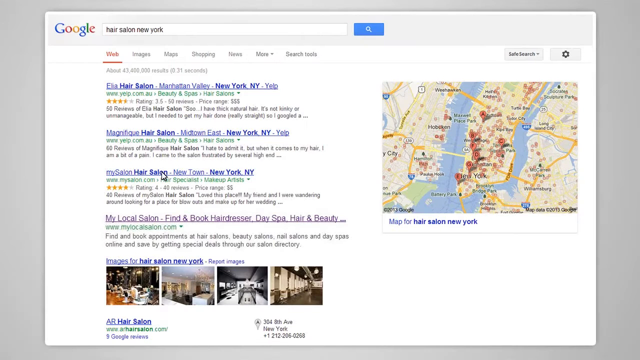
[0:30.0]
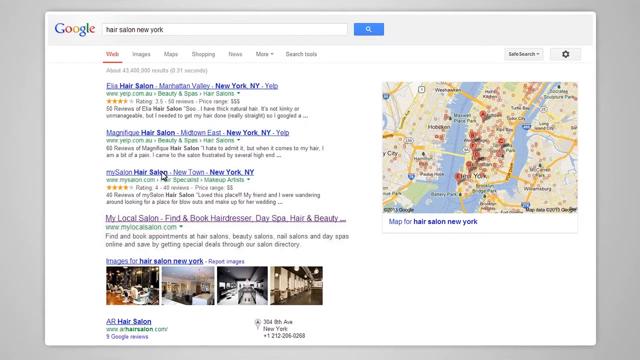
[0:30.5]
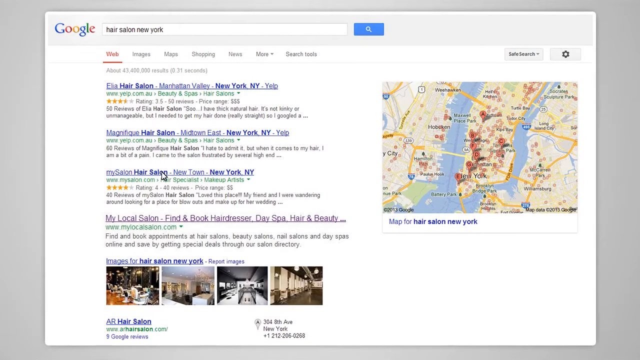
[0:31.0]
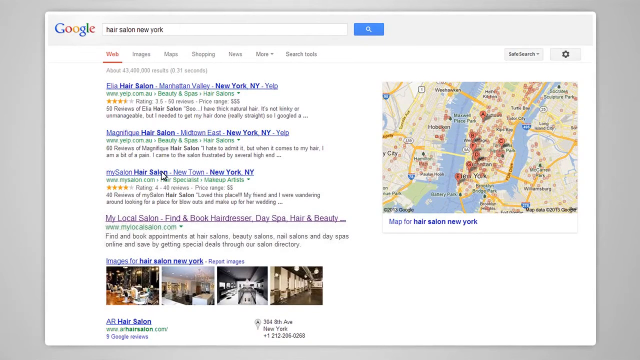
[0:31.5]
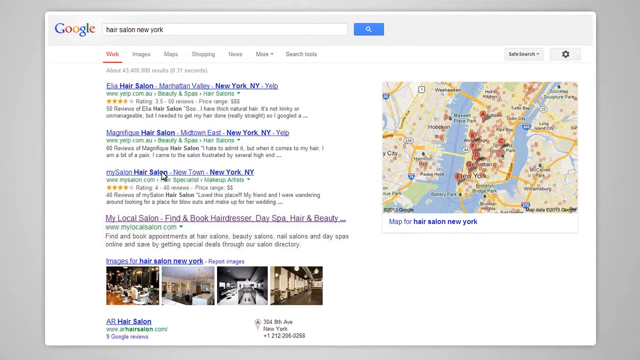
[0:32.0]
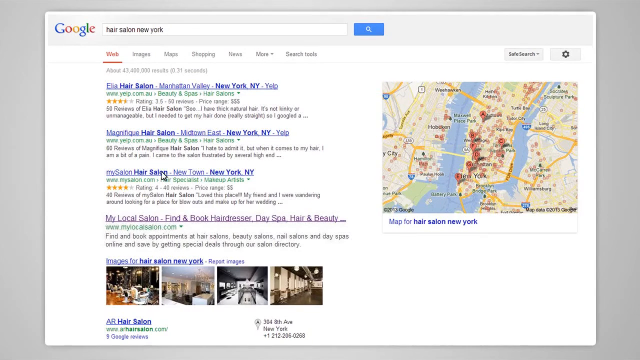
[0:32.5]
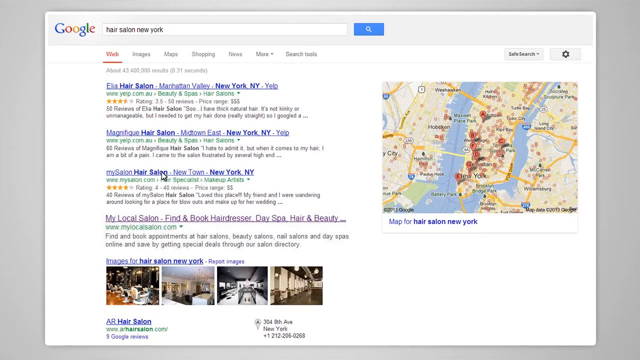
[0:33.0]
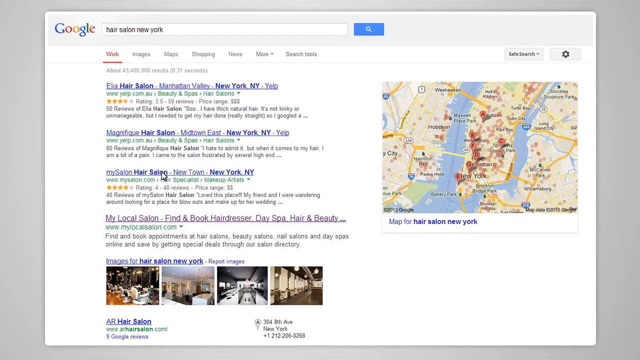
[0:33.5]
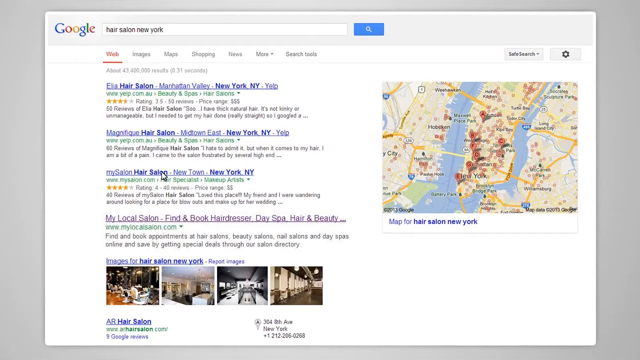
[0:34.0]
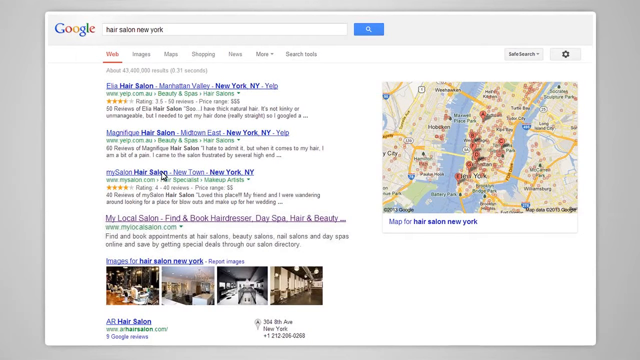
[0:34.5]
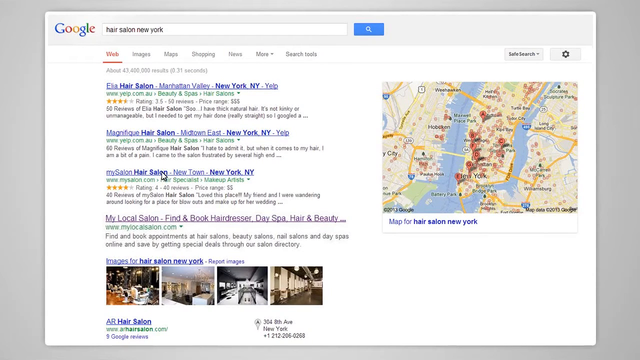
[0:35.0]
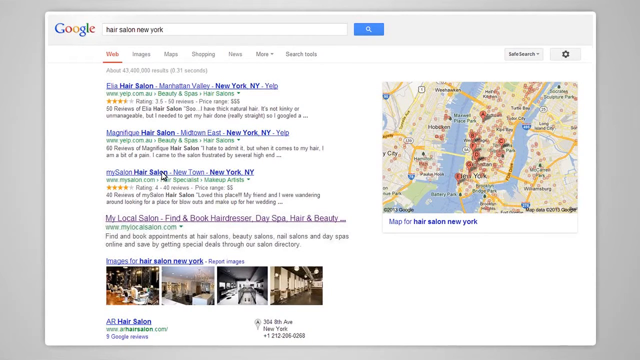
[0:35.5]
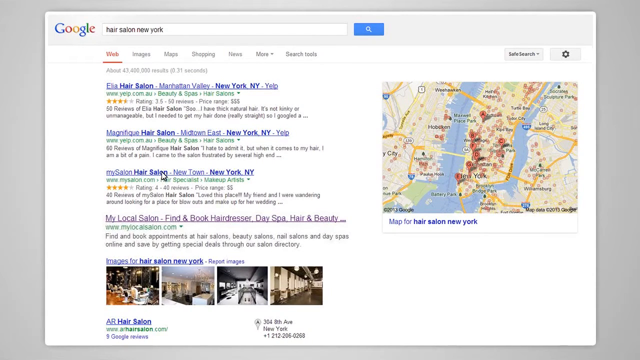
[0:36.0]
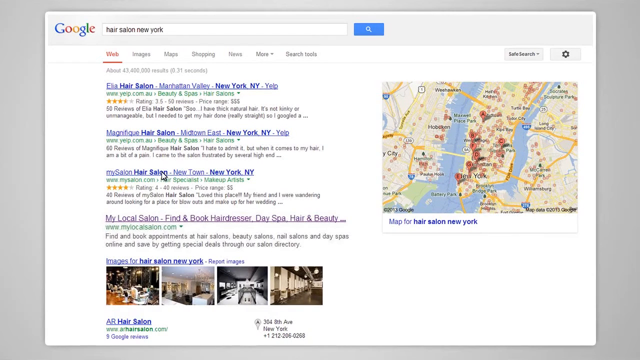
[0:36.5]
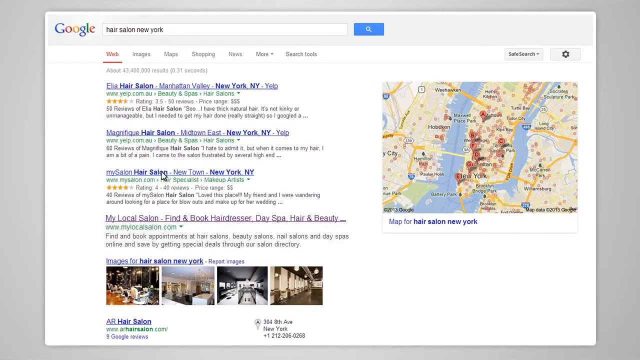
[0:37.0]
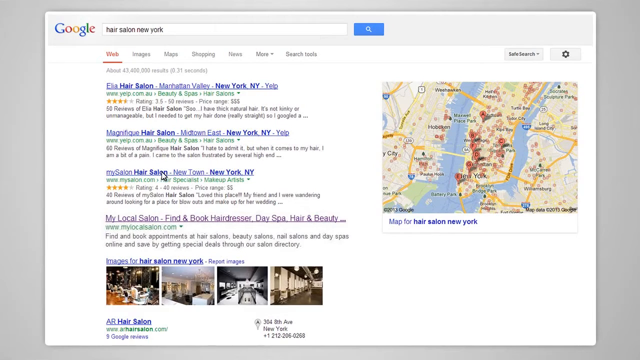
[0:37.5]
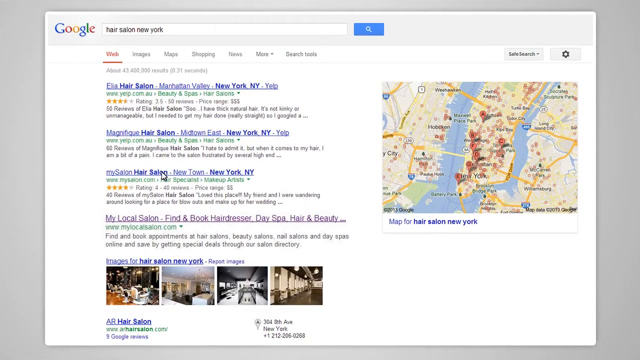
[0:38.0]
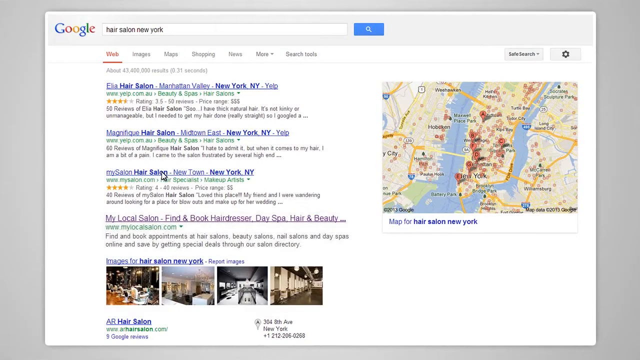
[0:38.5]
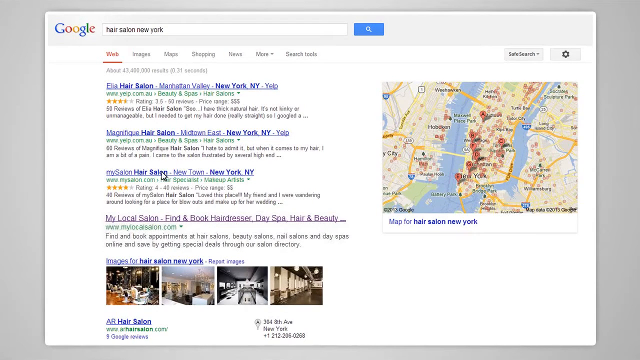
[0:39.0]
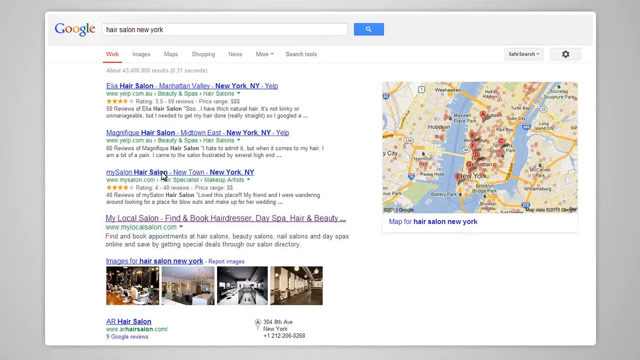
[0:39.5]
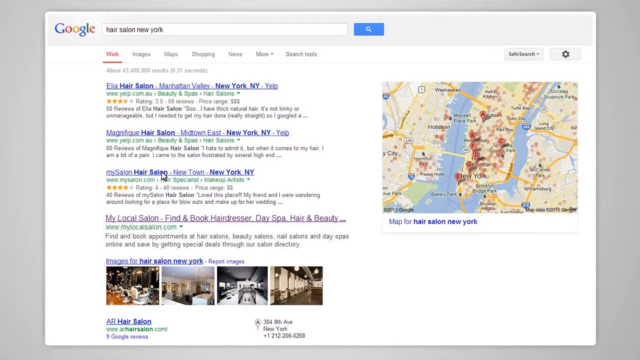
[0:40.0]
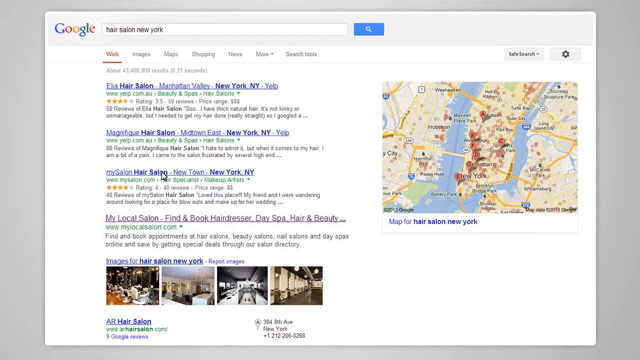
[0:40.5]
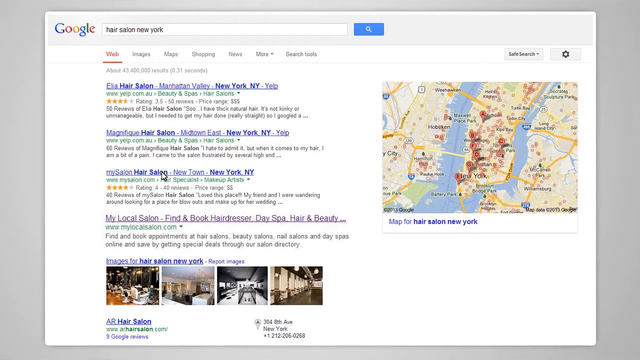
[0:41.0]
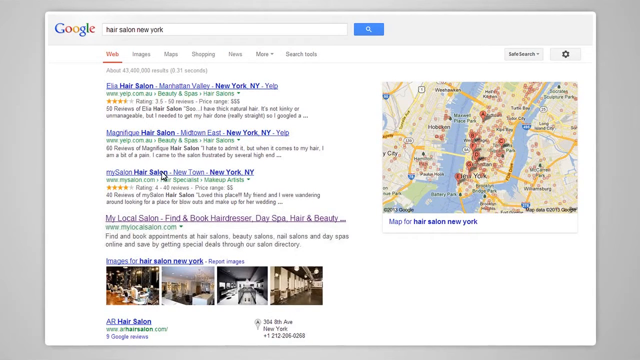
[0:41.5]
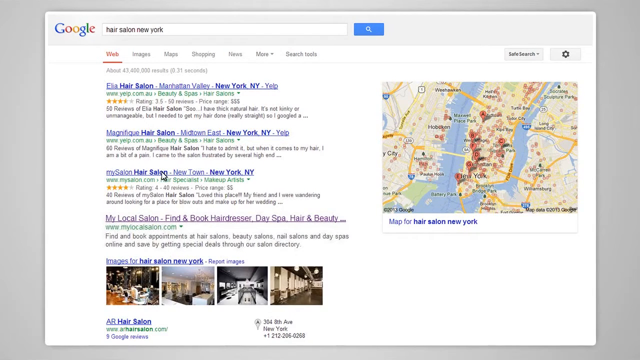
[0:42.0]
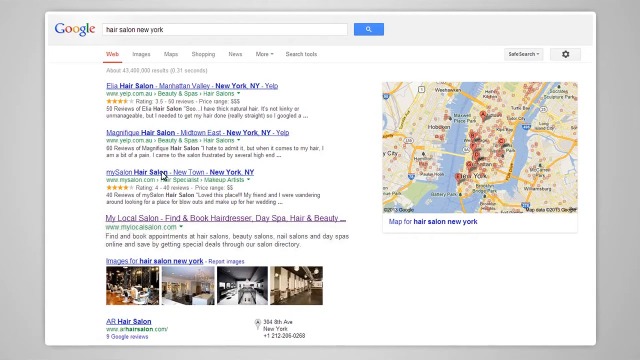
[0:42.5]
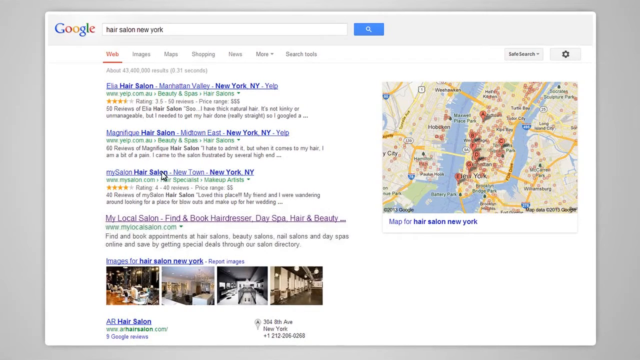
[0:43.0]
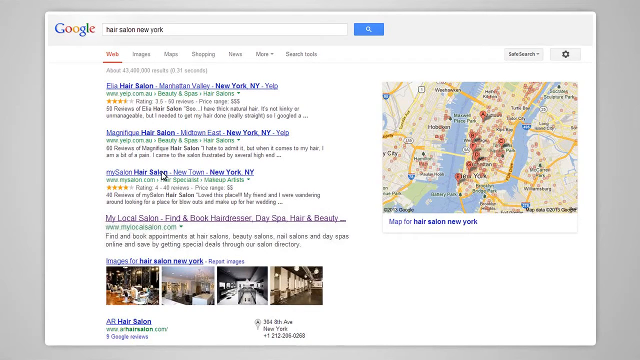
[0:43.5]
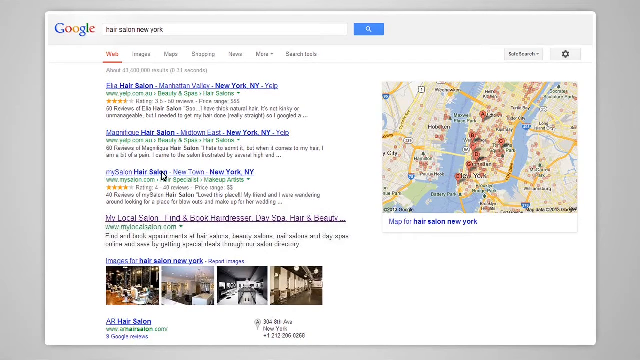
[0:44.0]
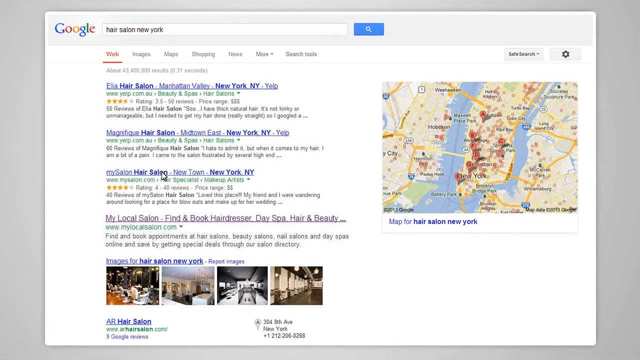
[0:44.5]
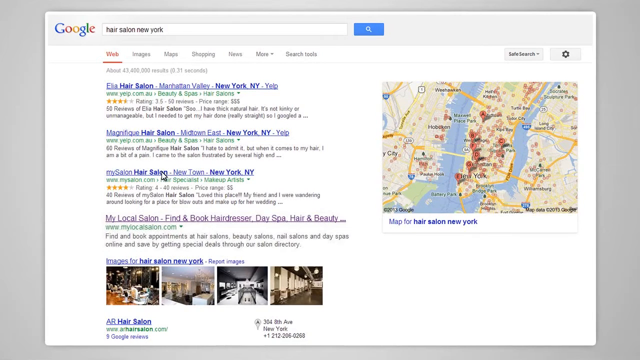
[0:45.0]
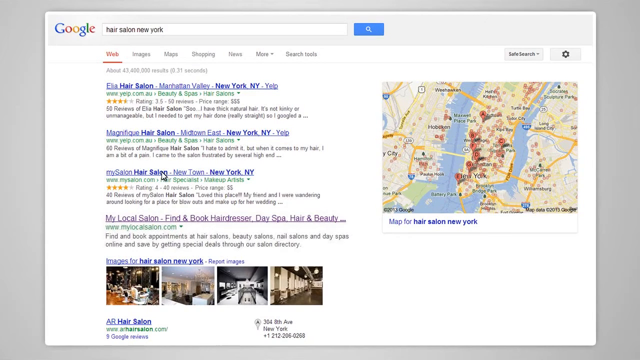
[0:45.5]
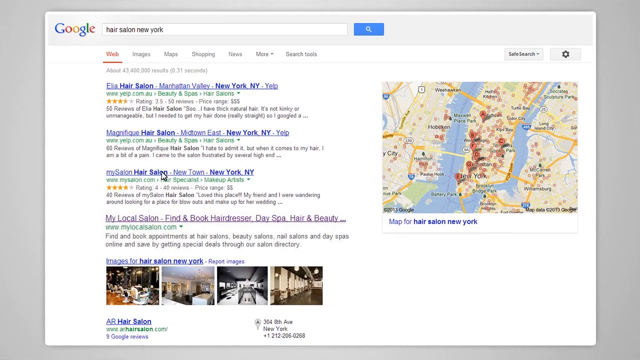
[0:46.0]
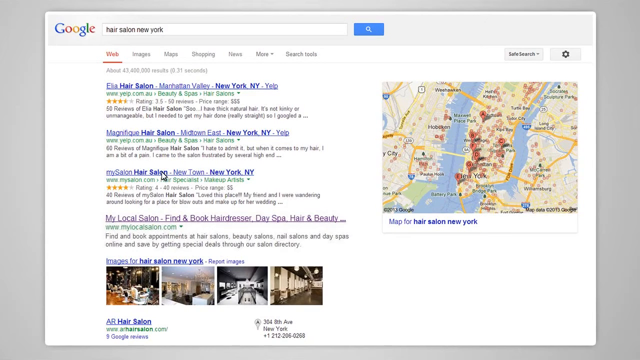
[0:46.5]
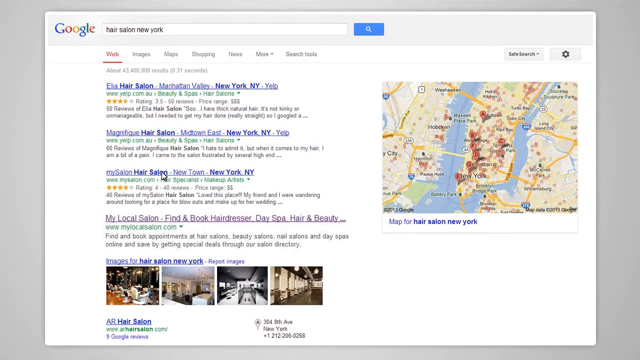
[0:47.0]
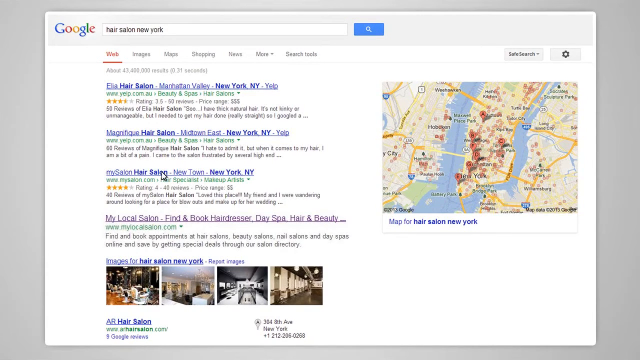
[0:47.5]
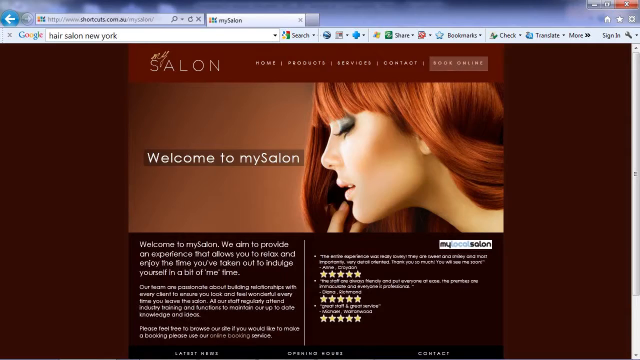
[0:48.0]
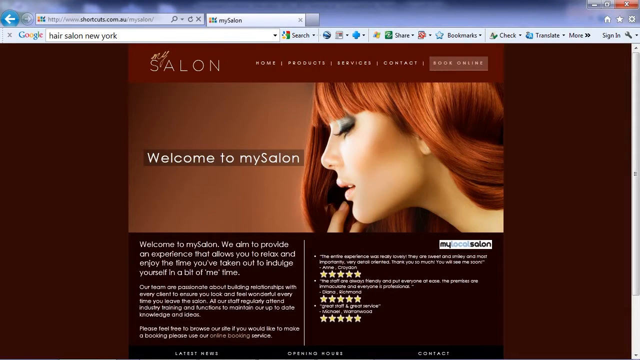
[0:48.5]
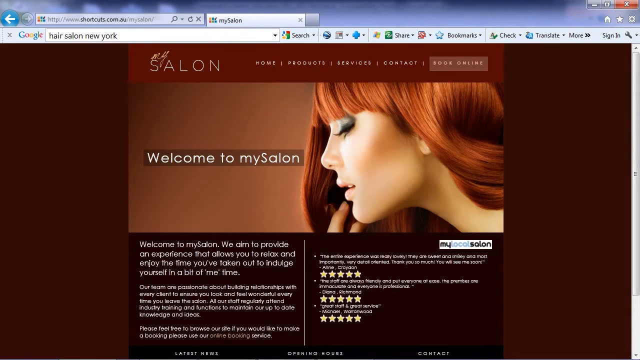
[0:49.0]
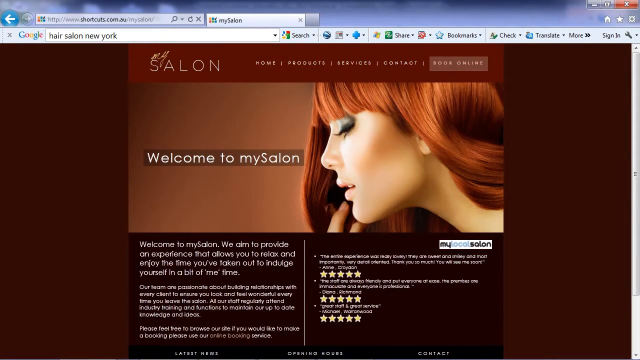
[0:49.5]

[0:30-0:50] Something on Google is shown, with instructions on where to find the place. The video then shows what to type when searching for it; what first seems to be a book is a logo for a salon. The salon's location is shown, along with information about it.